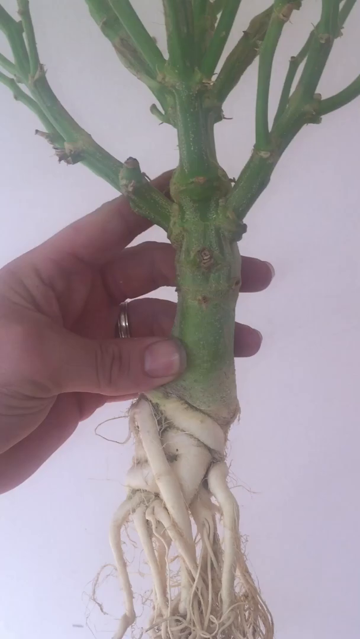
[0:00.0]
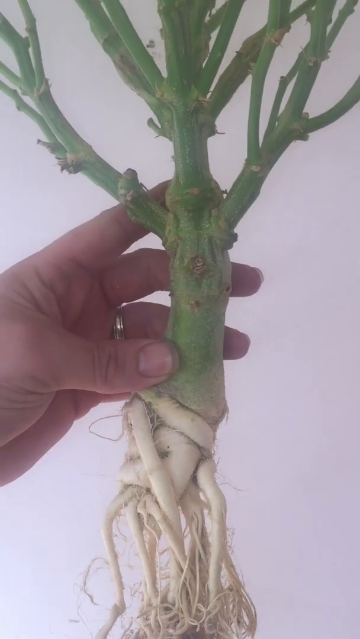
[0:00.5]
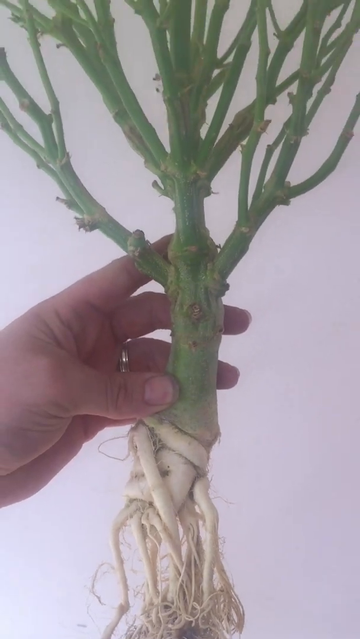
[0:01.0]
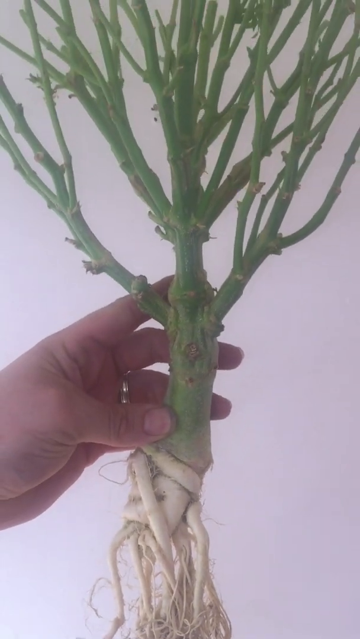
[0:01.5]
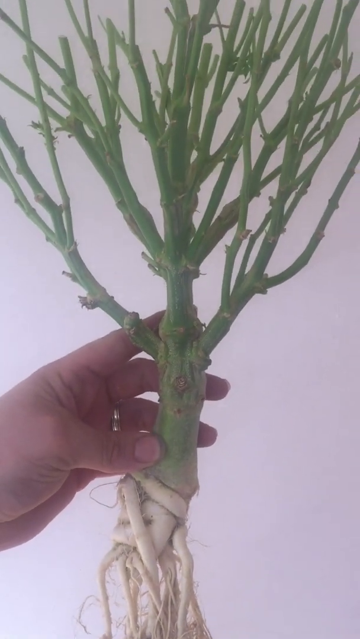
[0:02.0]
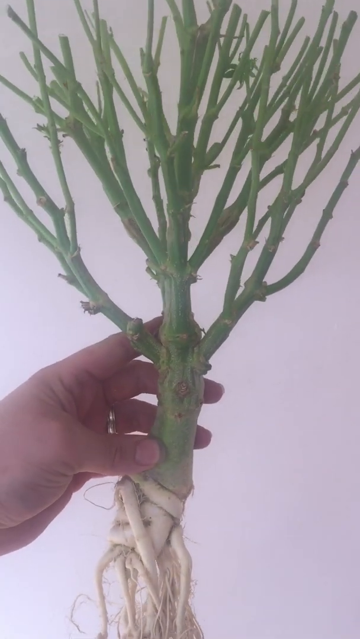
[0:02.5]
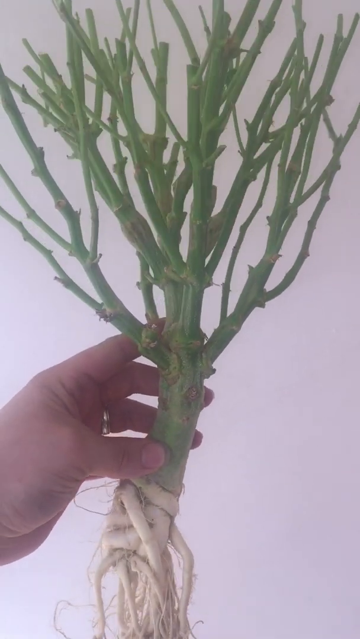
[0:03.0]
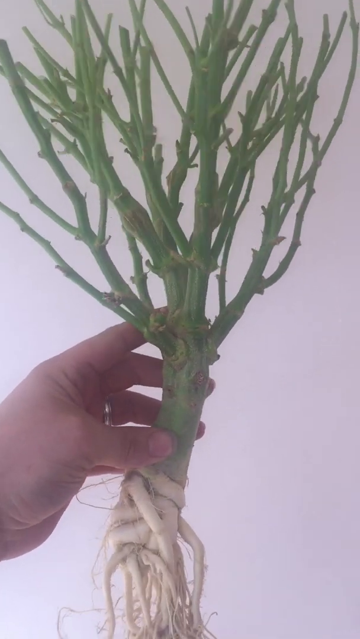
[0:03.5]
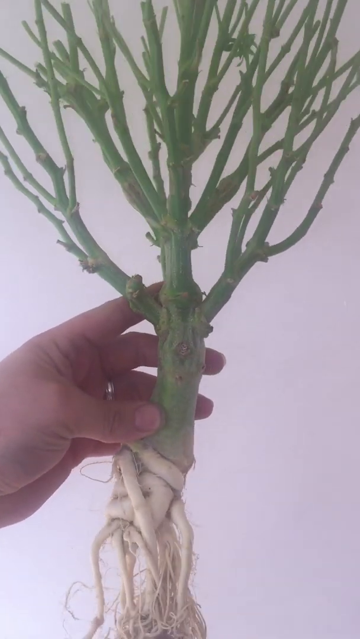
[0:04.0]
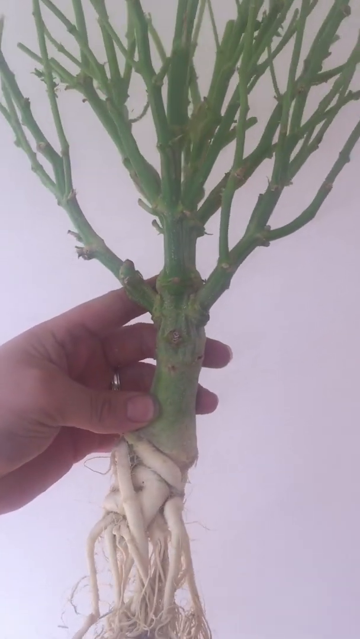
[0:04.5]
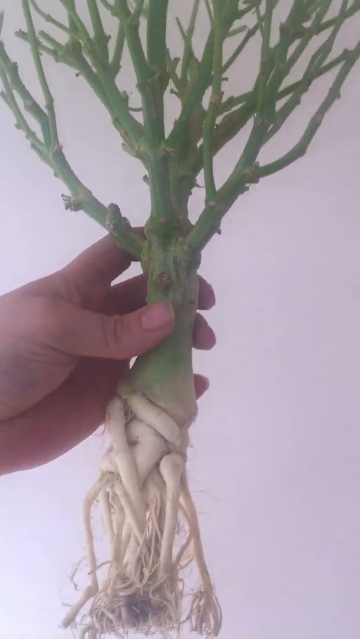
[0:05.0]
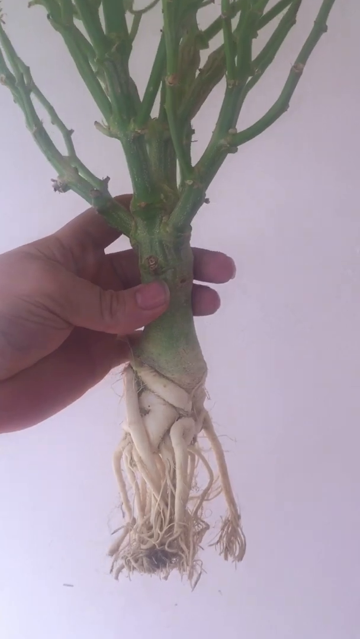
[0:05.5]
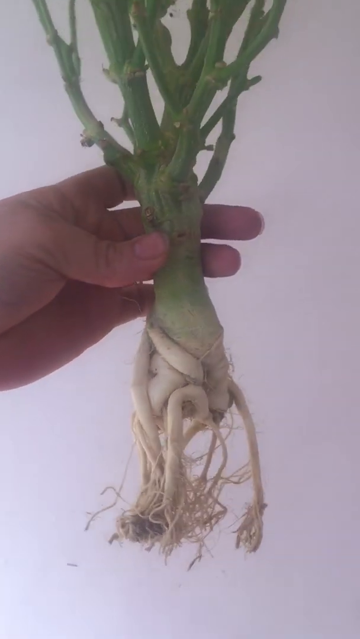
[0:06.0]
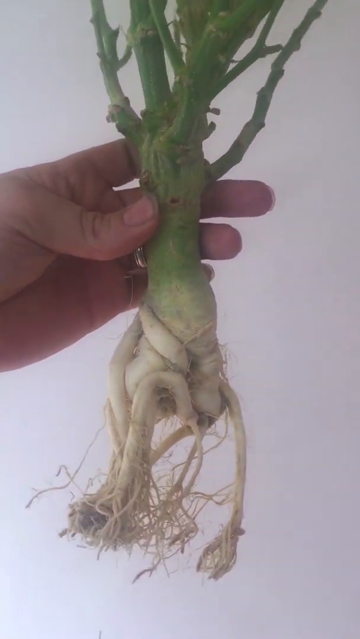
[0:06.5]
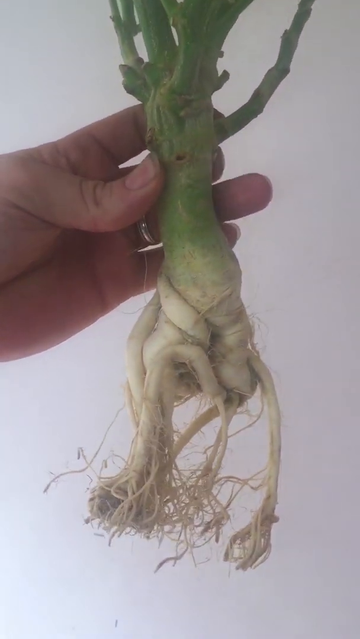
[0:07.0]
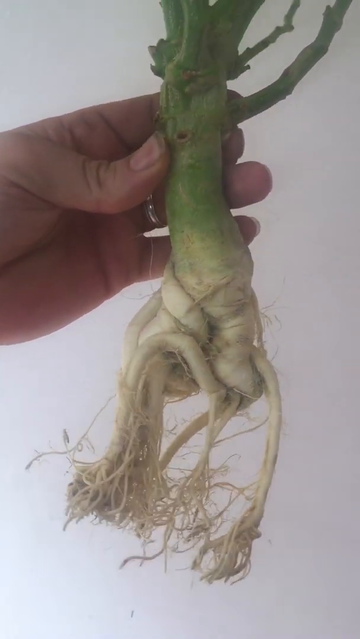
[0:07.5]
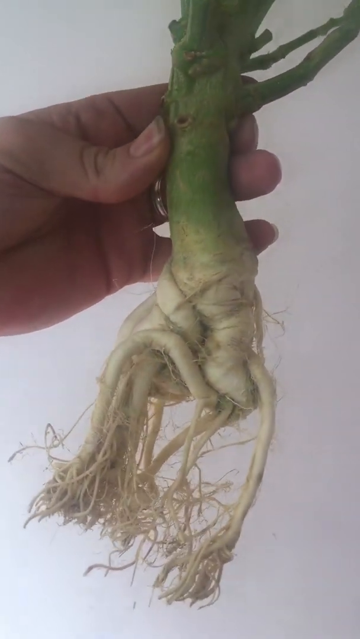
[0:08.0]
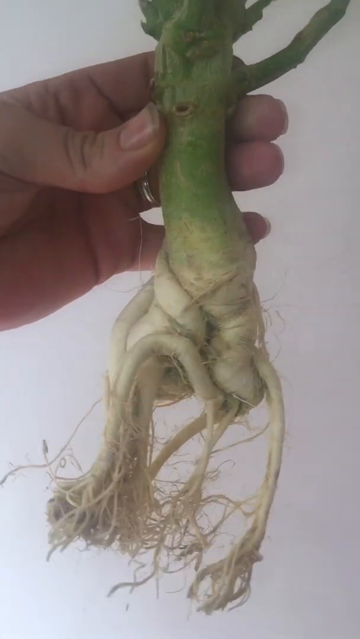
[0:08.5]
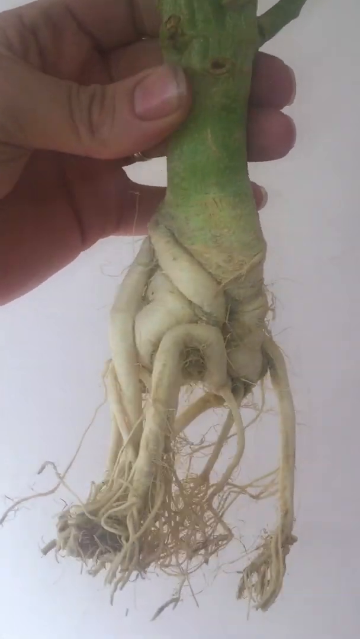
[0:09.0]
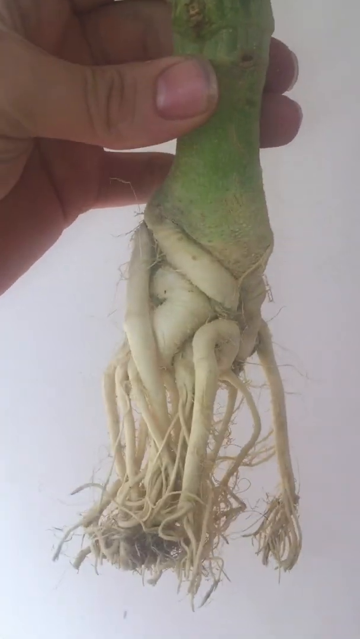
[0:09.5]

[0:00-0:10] A green plant with brown roots is held by a person who is not visible; only a ring on their left finger can be seen, and he has short nails. The plant looks fresh green, the roots are a bit brown, and no soil is visible on the roots. The background behind the plant is white. The camera moves as it zooms, and the person twists the plant so the roots are visible. As the person zooms in, the plant is visible with some branches; it has no leaves and is green in colour.